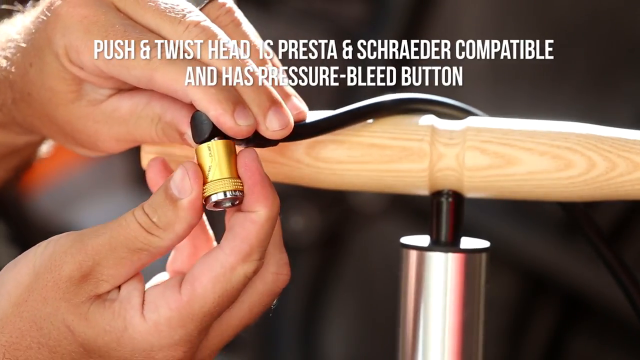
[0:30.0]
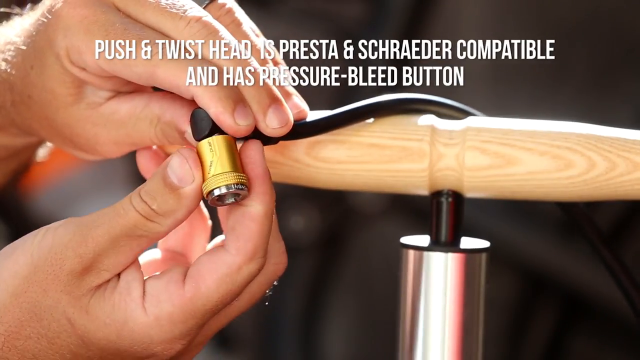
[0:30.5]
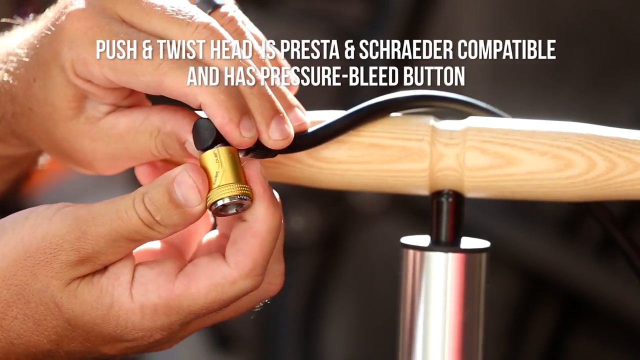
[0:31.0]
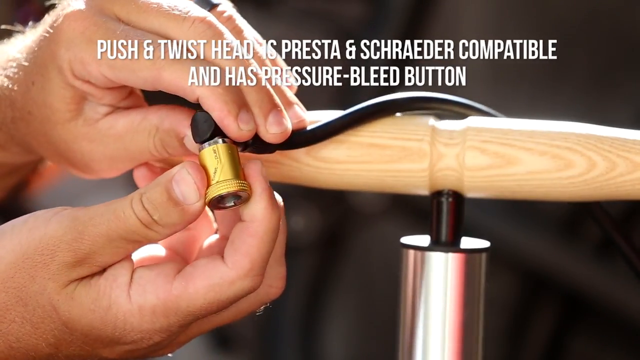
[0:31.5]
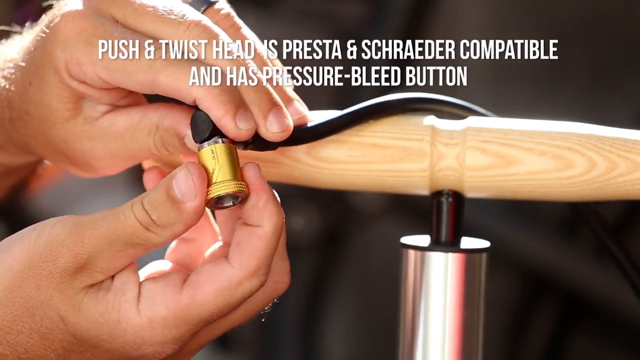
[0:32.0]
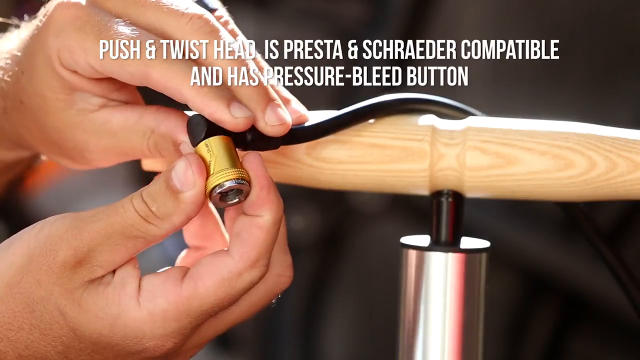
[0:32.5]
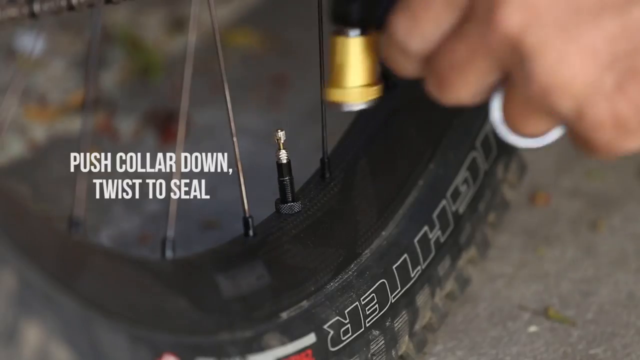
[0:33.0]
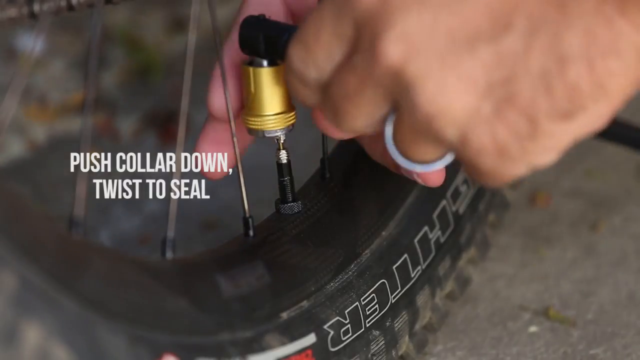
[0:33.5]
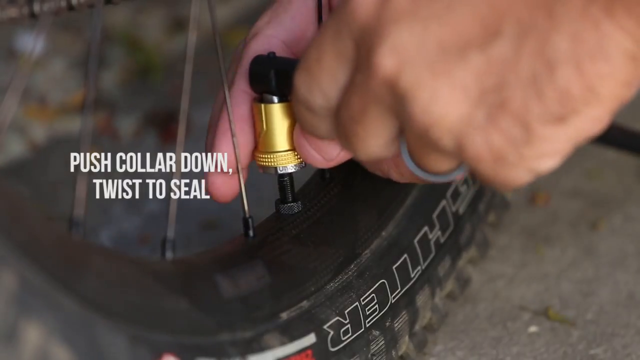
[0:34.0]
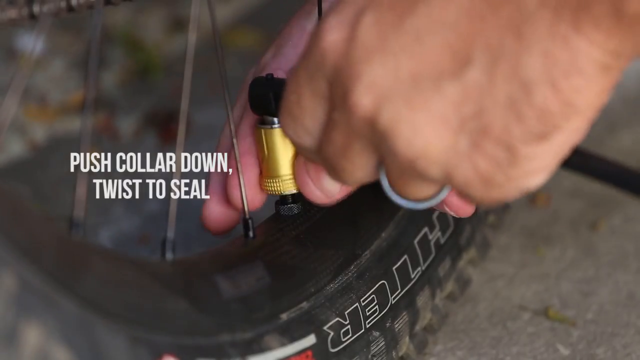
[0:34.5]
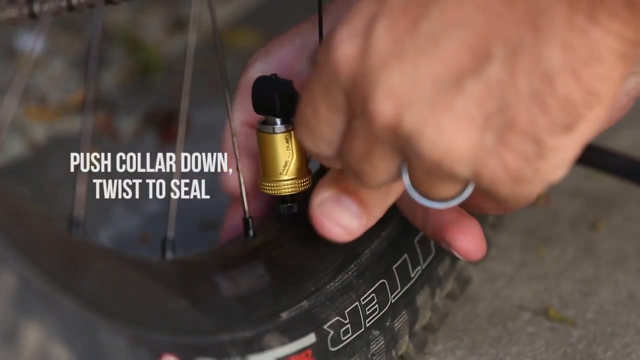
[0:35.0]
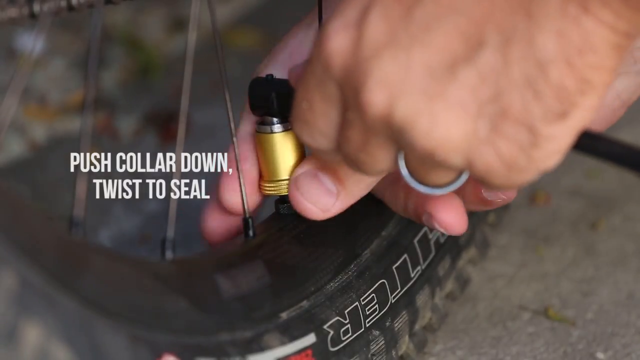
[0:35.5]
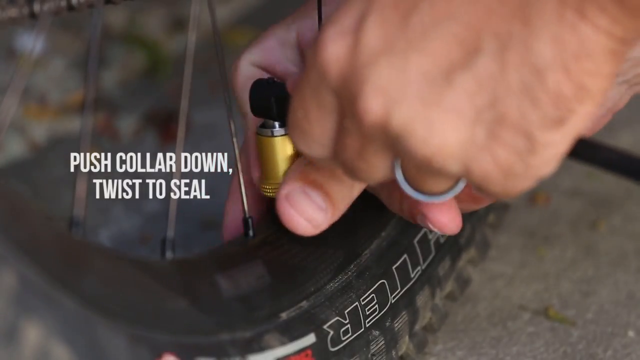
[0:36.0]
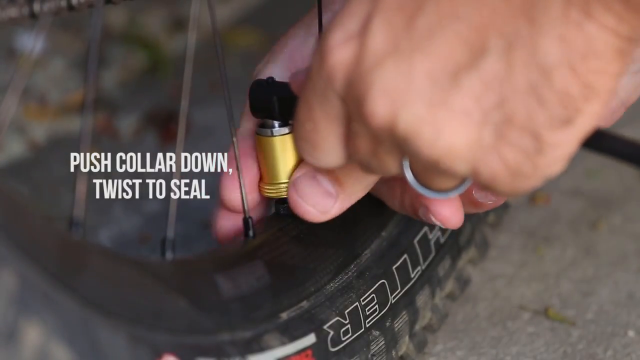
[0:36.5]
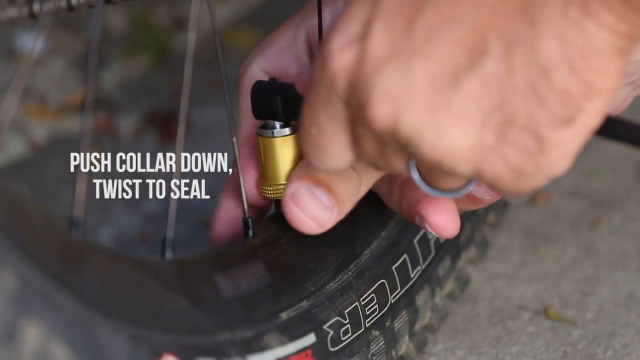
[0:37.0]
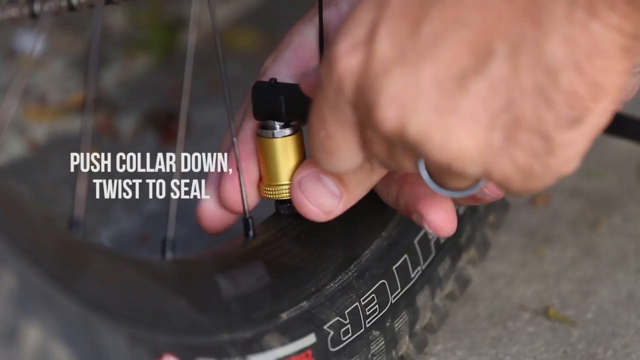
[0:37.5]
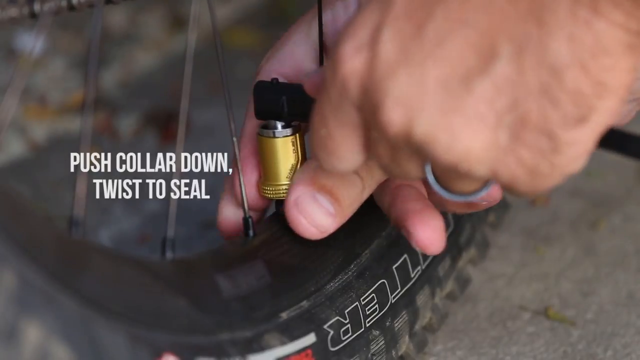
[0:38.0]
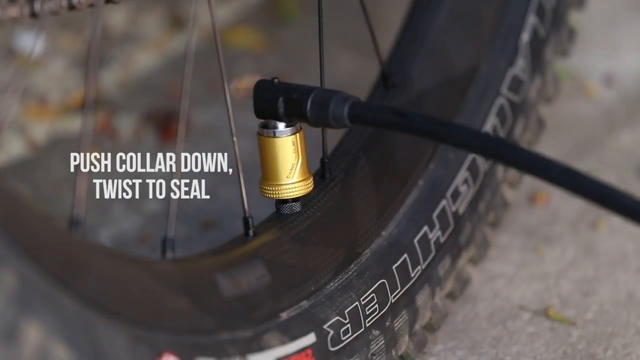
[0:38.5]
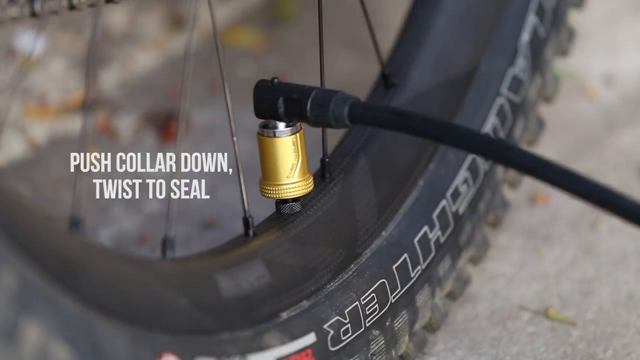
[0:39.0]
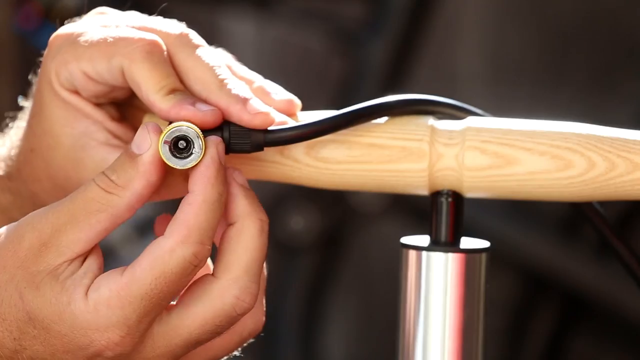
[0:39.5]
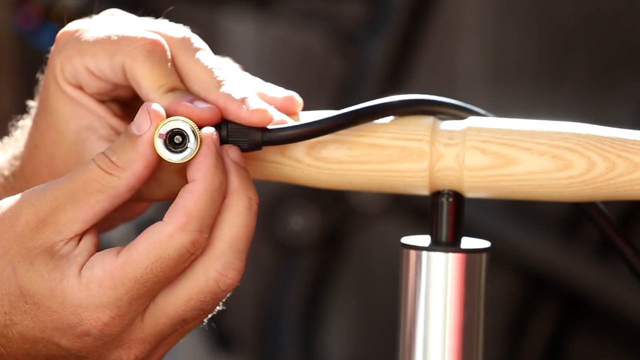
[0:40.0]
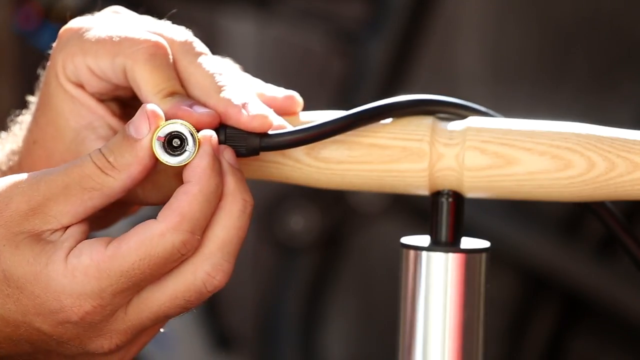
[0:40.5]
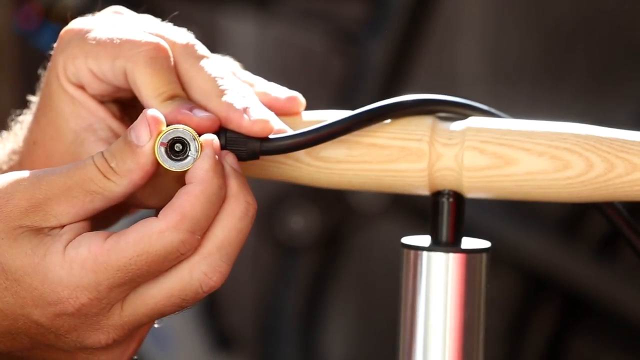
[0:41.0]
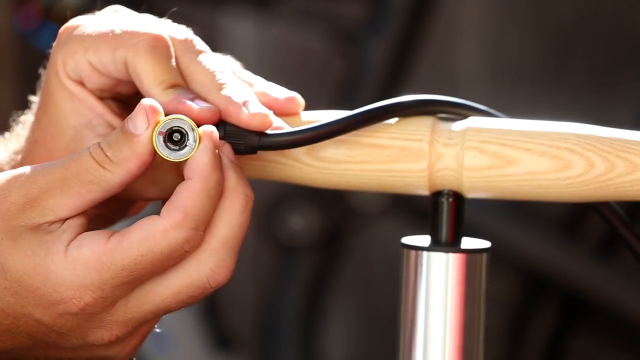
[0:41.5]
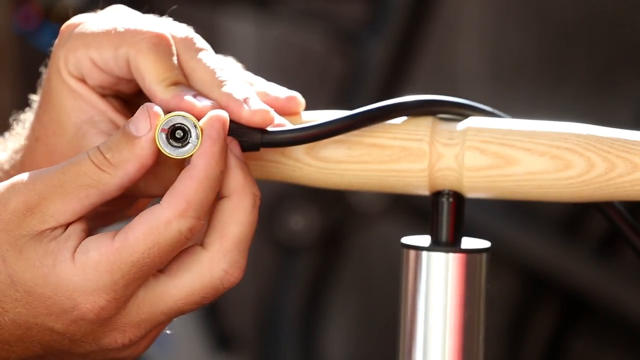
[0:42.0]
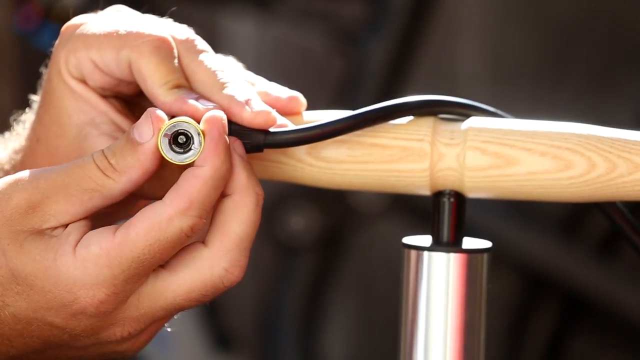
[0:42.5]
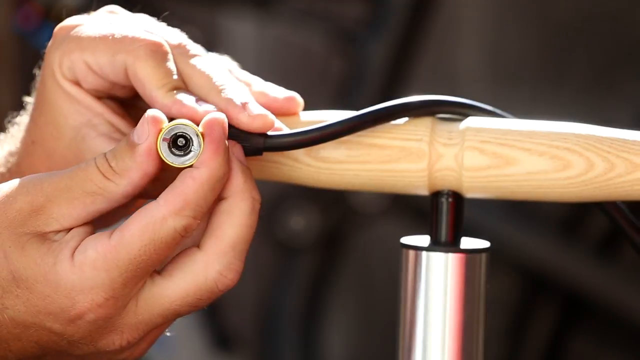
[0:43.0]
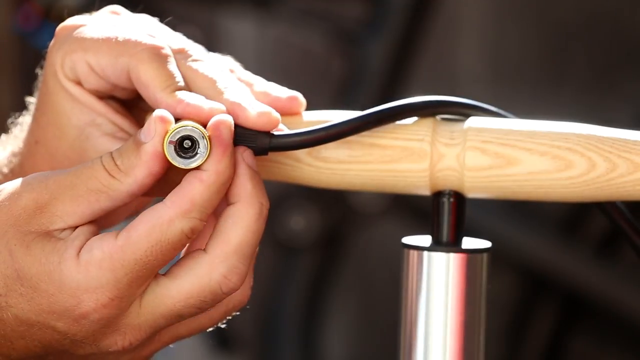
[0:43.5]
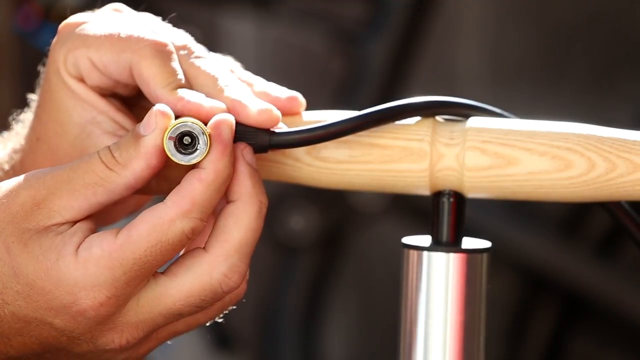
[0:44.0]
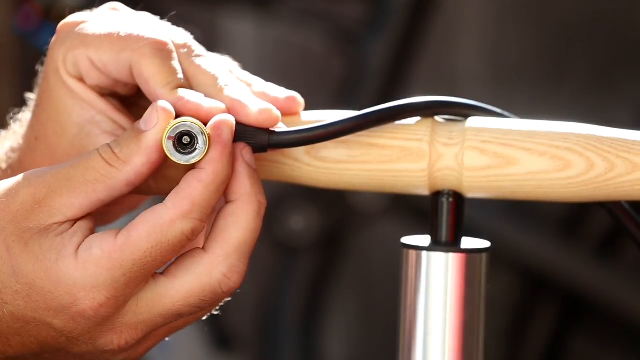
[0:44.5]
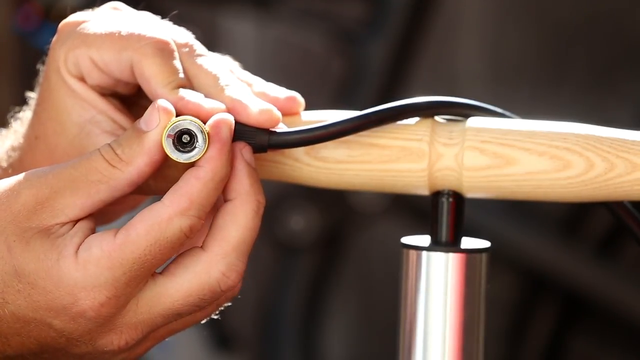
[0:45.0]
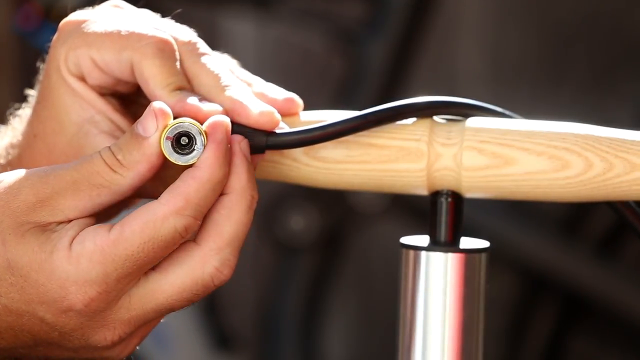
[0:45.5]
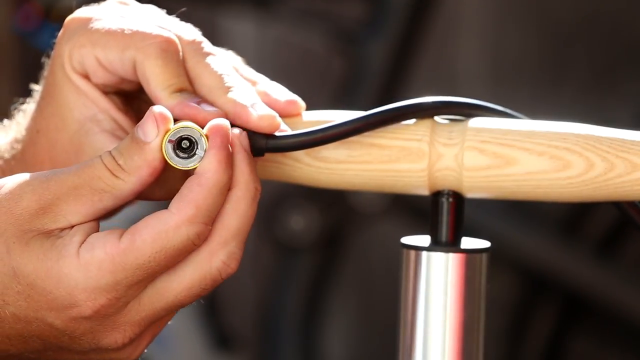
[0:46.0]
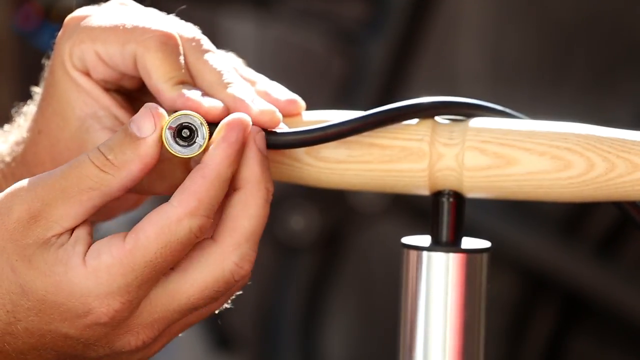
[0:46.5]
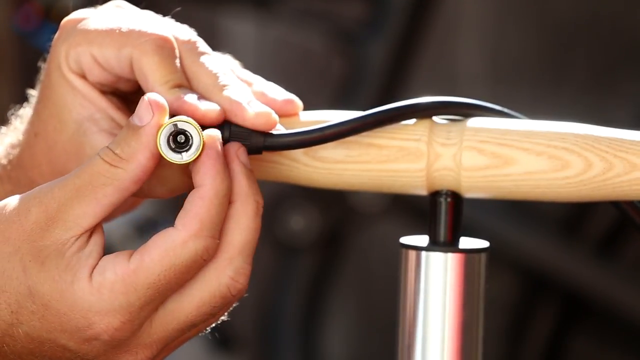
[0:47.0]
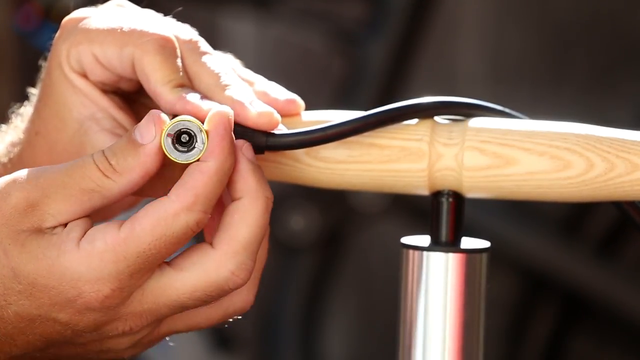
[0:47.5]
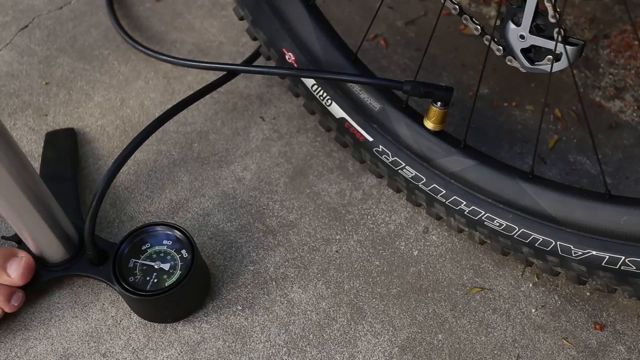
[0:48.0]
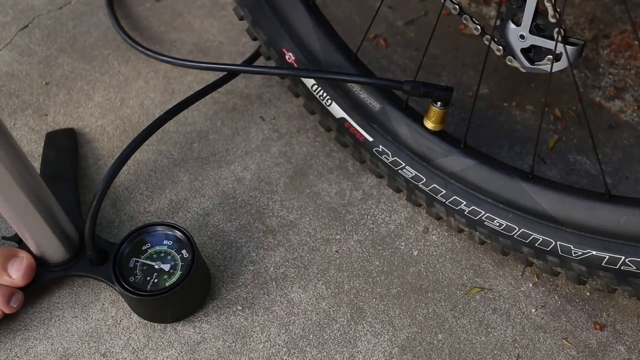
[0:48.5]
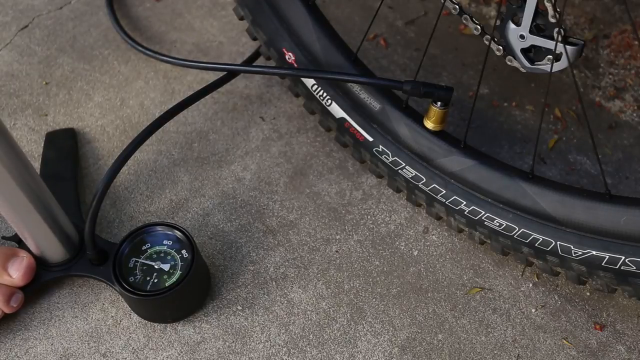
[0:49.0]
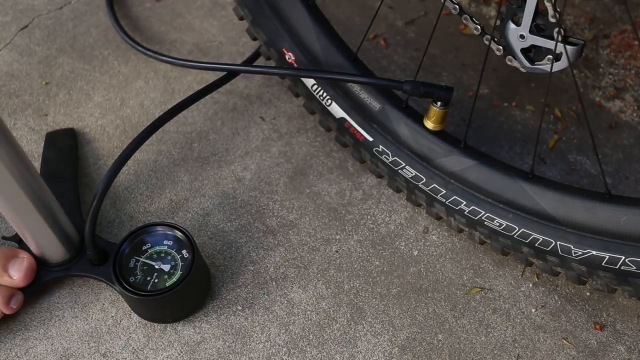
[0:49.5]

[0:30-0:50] A bicycle is shown with a water bottle attached to it. A person holds the pressure pump used to fill air and connects it to the bicycle's wheel. The measurement on the pressure gauge is shown, with the pointer moving around the scale to show the pressure of the pump. The person holds the pump with two hands and presses to fill the wheel with air. As the video continues, the person sets up and fixes the pumping equipment, and visible text in a white, bold font gives instructions on how to use the equipment to pump the bicycle's wheel.